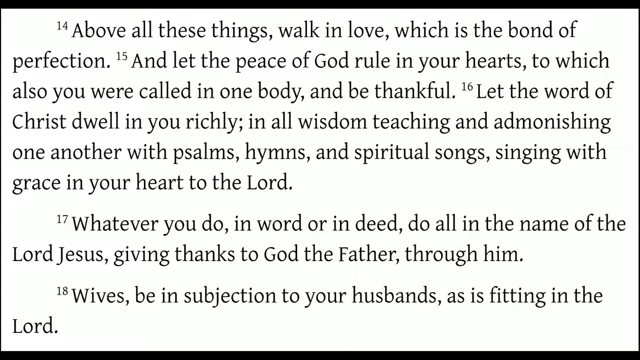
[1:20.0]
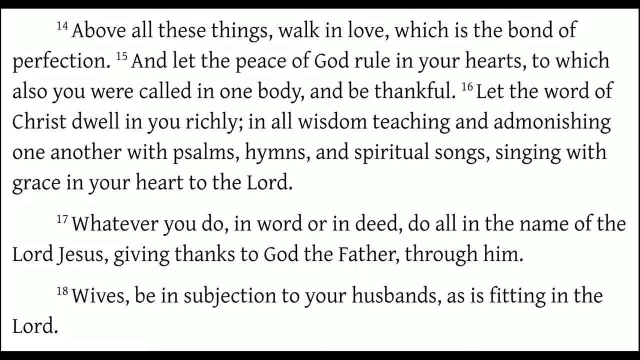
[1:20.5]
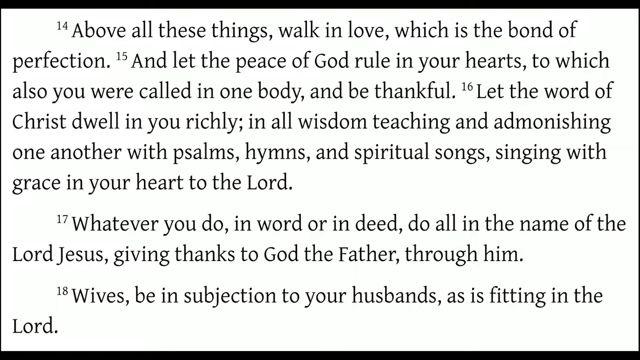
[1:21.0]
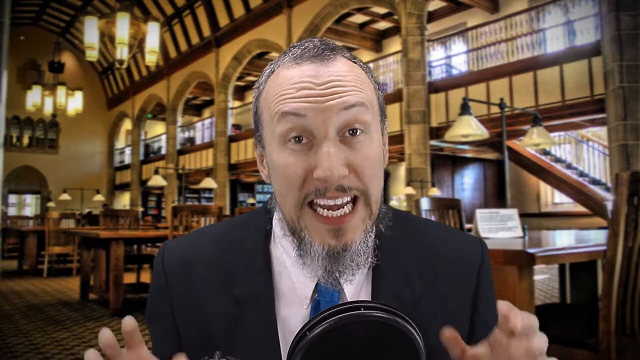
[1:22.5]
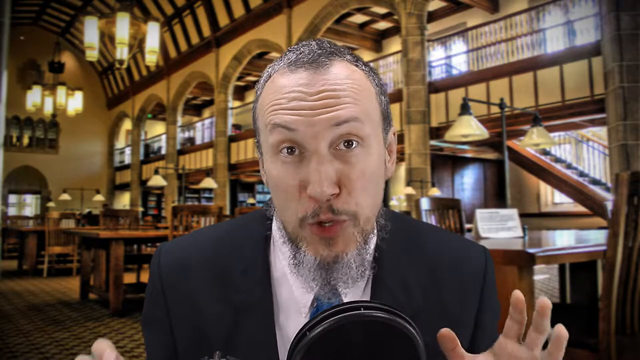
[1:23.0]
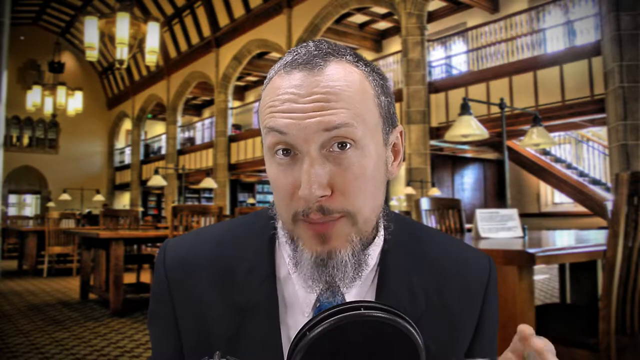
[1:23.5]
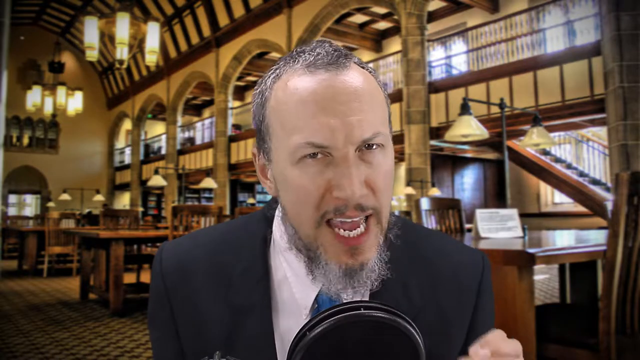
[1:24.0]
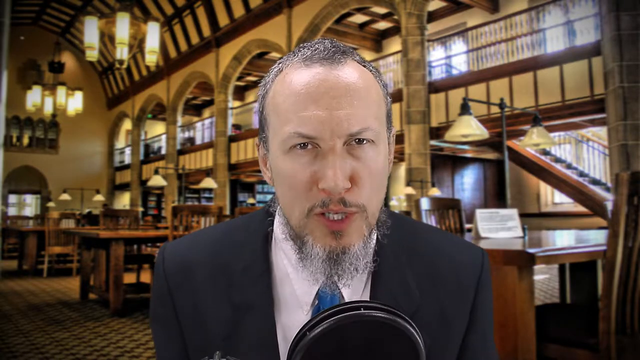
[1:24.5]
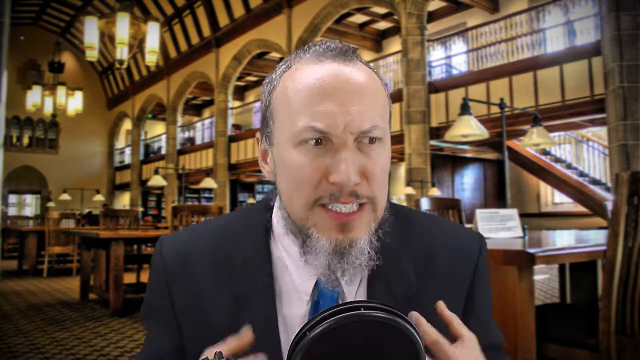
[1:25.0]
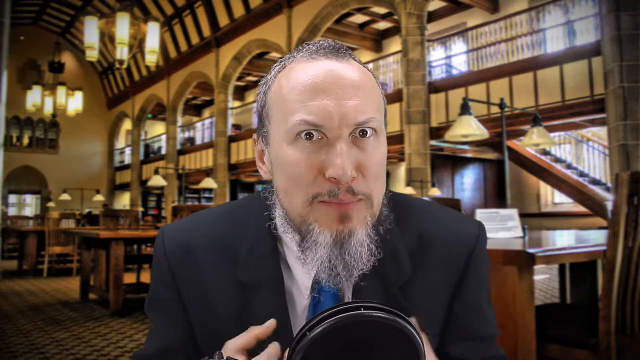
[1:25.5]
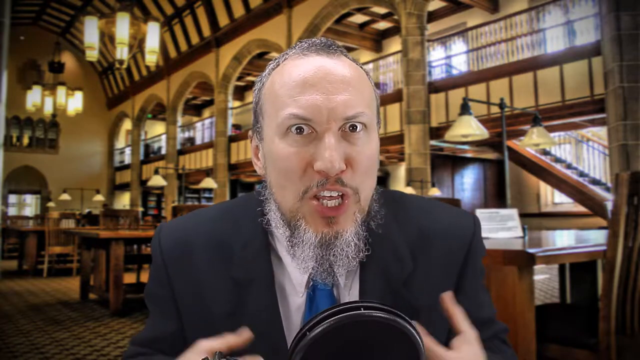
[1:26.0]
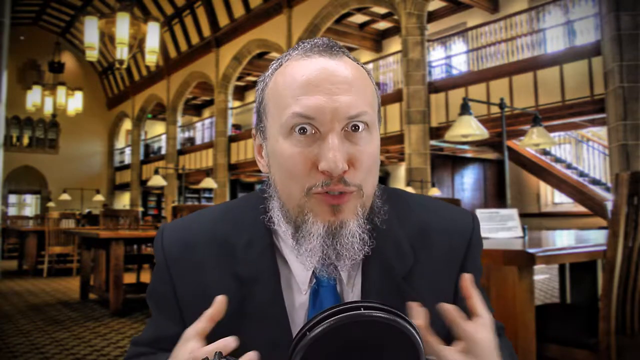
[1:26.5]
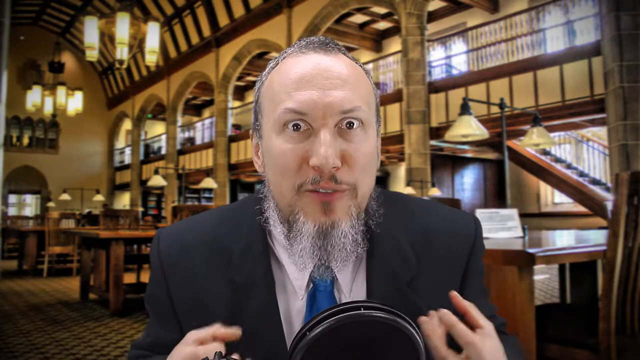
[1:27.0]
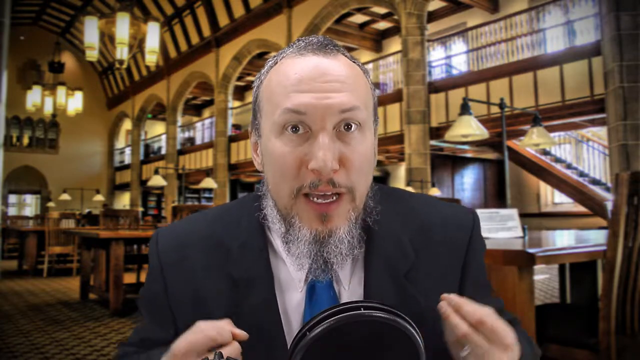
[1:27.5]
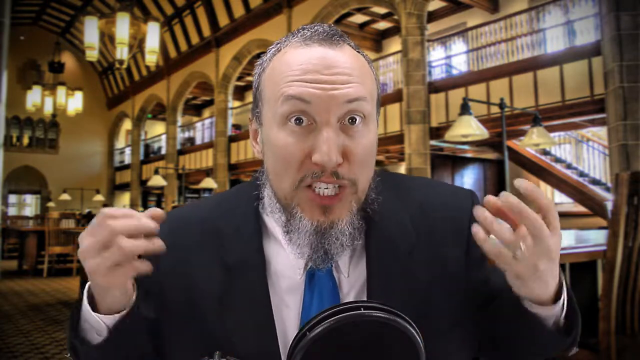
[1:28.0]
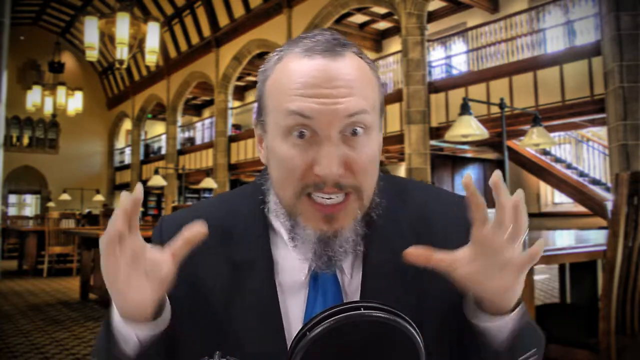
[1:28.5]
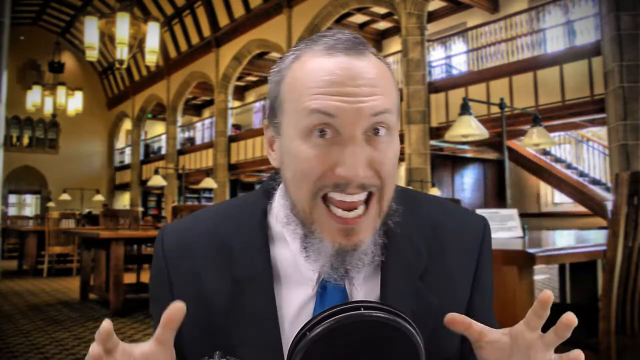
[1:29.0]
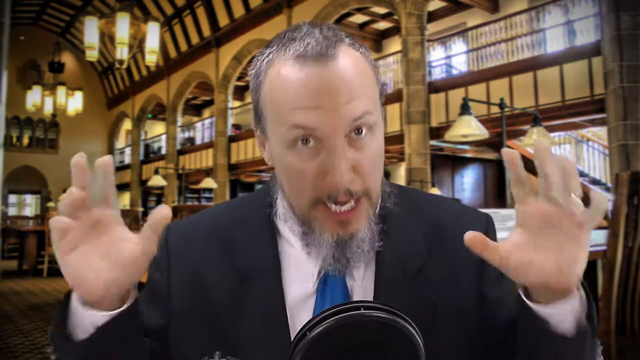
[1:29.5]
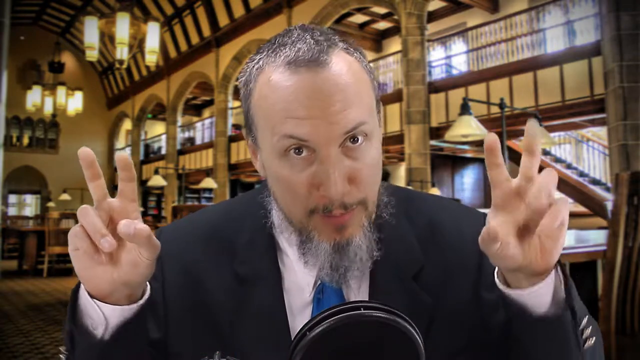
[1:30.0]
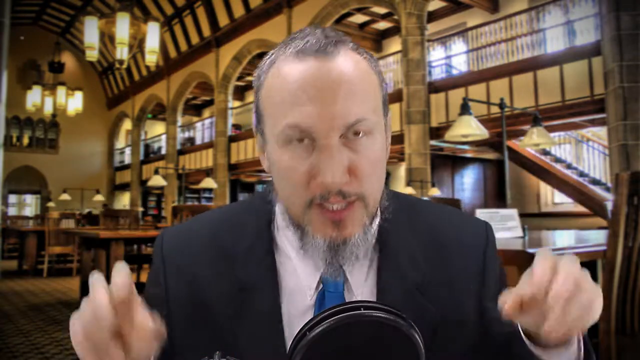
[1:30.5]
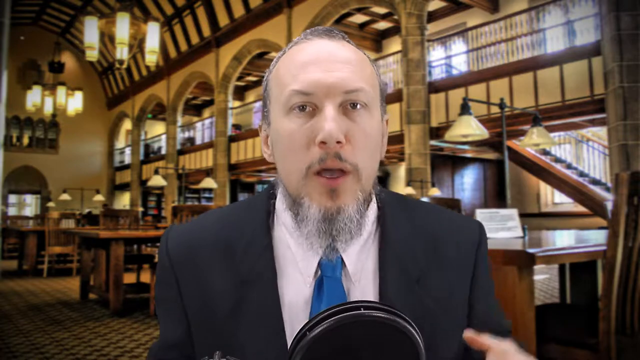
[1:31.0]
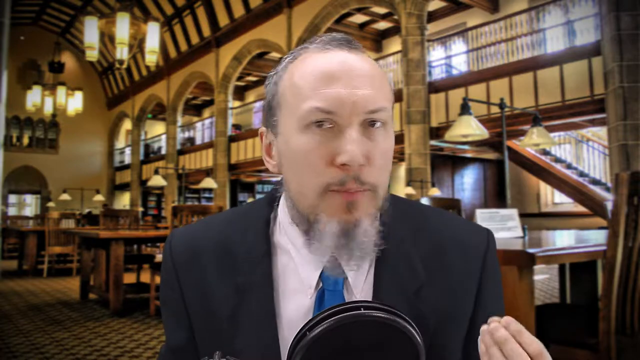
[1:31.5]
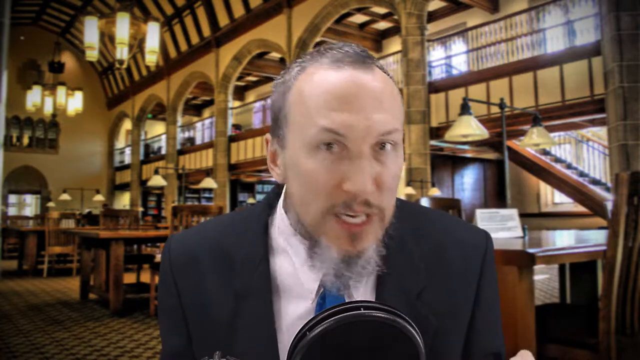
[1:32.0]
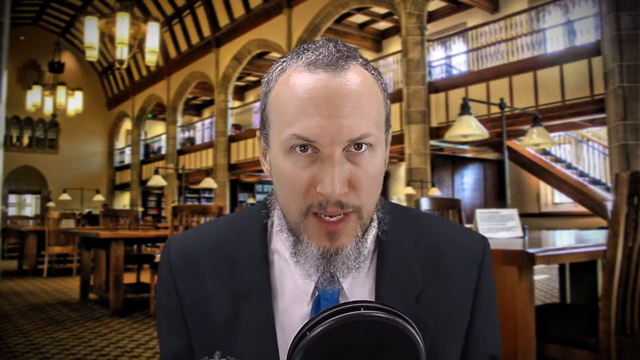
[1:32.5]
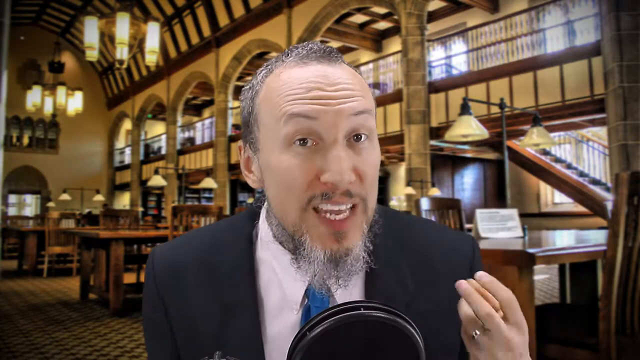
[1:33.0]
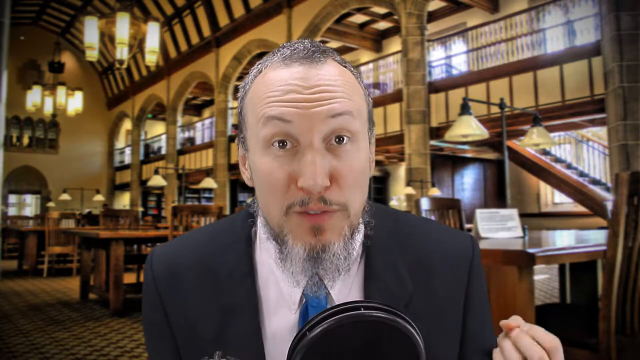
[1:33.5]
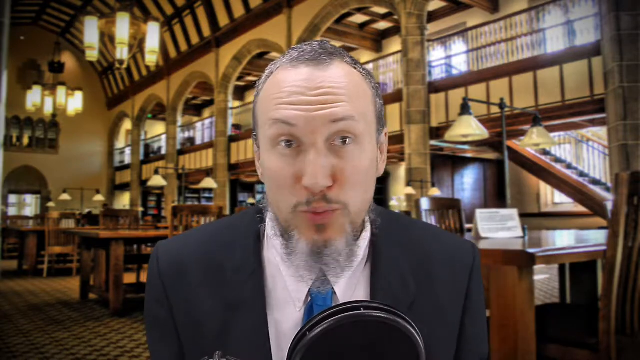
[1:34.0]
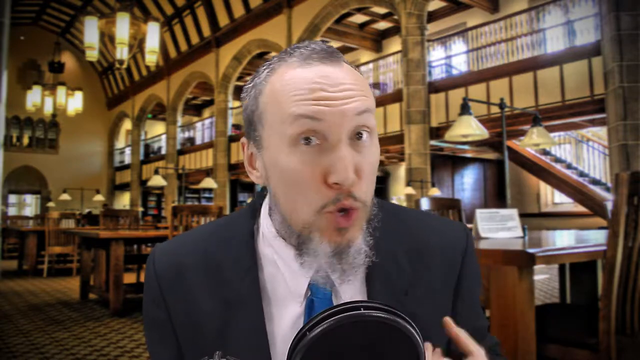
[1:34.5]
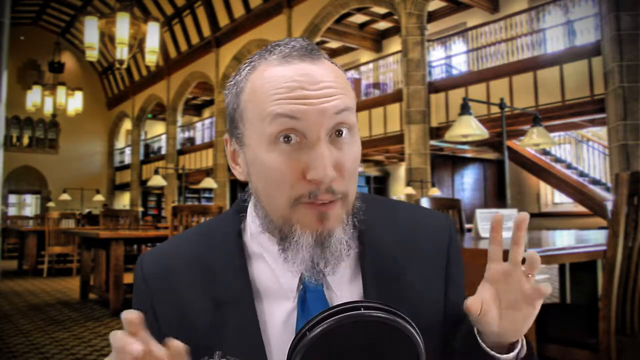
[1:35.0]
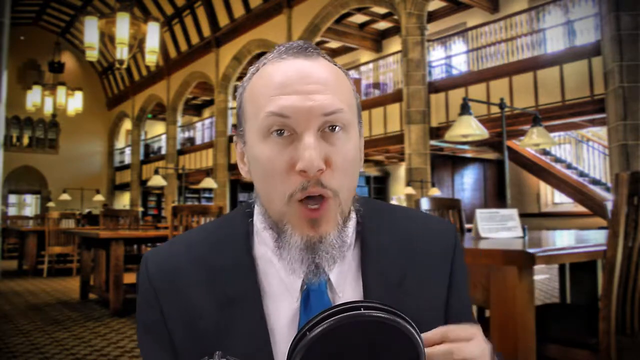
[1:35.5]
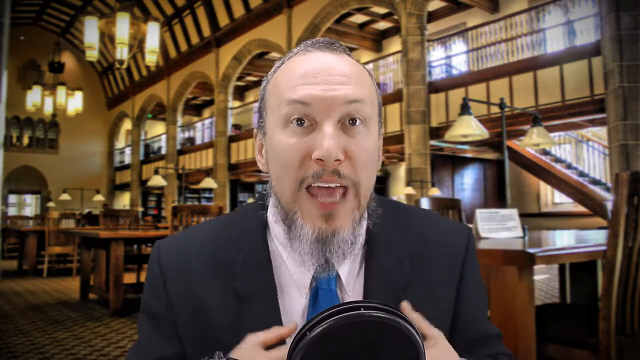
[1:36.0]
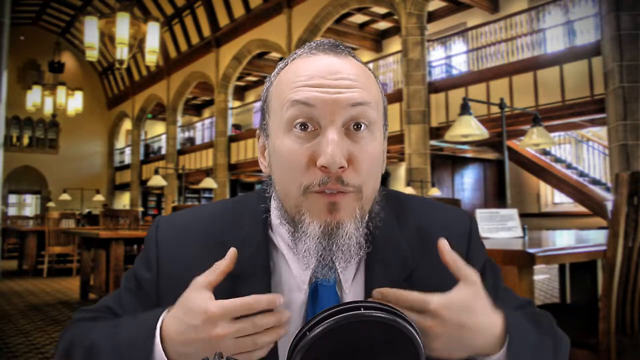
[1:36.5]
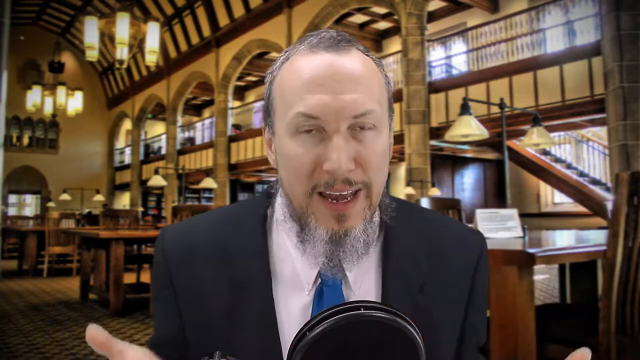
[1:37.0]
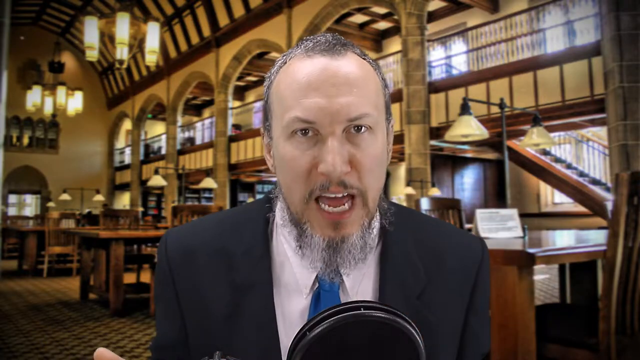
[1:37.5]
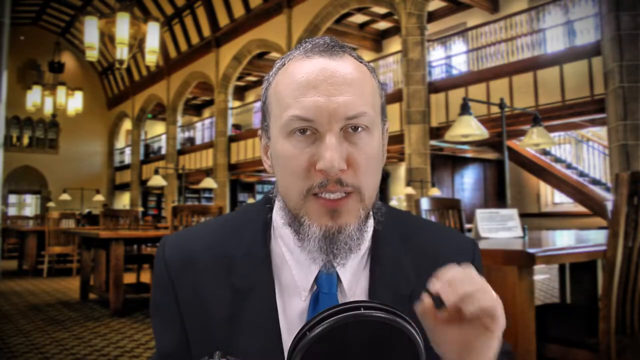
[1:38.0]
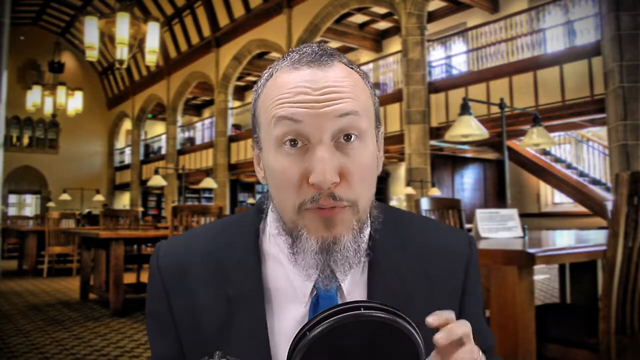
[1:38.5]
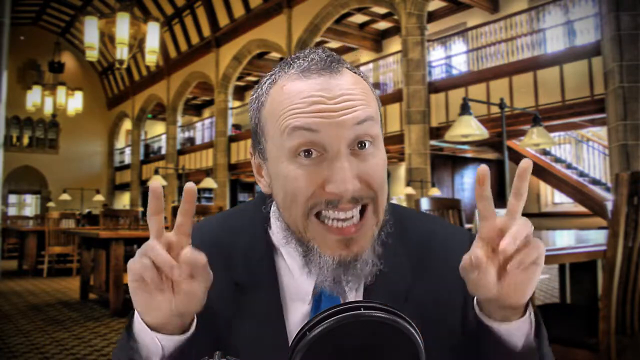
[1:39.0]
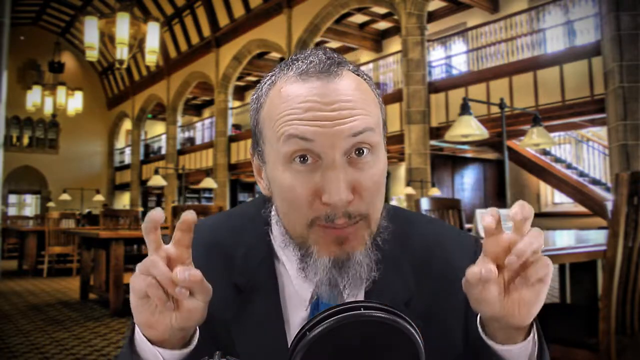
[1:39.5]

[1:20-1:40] The view is again zoomed in on the Bible verse, with verse 14 at the top of the page, this time zoomed all the way in with no space at the sides. It reads "Above all these things, walk in love, which is the bond of perfection, and let the peace of God rule in your hearts, to which you also were called in one body. And be thankful that the world of Christ dwells in you richly, in all wisdom, teaching and admonishing one another with songs, hymns, and spiritual songs, singing with grace in your heart to the Lord." The verse stays on screen for a while, then the view switches back to the narrator. He is very animated, with his hands up making air quotes, aggressive facial expressions, and his head aggressively moving in and out toward the screen, seemingly in disapproval.